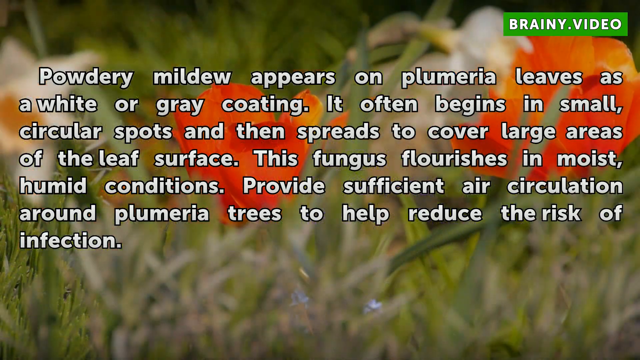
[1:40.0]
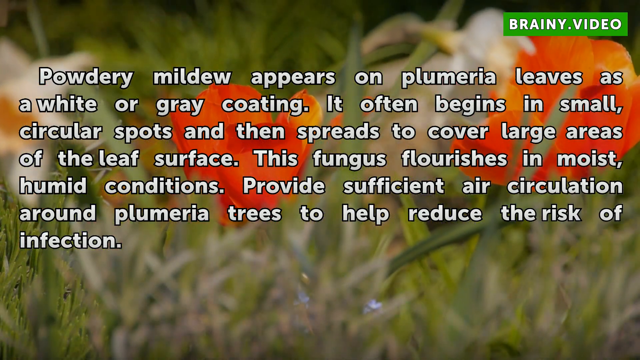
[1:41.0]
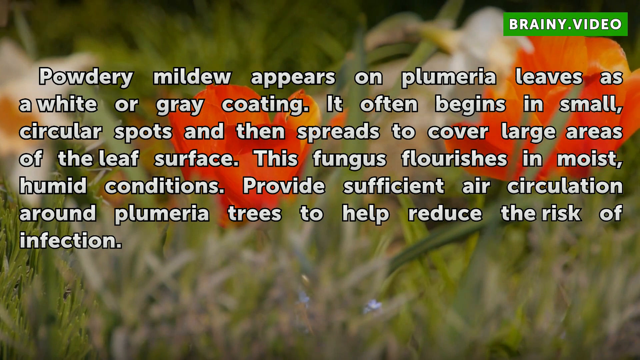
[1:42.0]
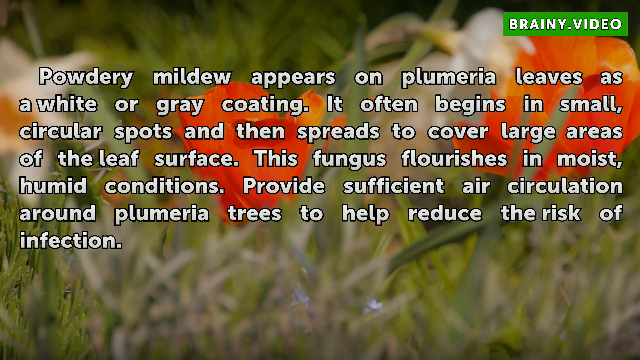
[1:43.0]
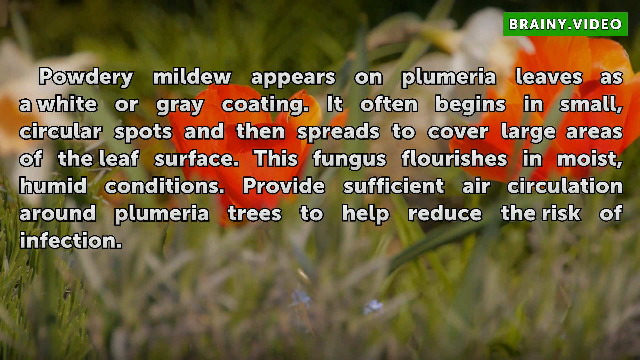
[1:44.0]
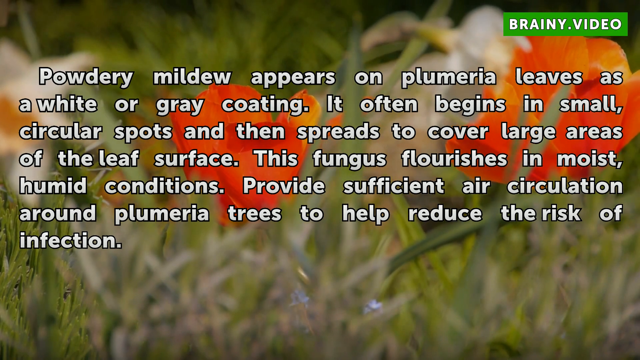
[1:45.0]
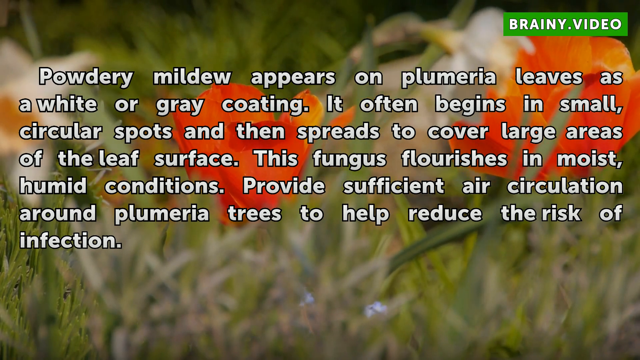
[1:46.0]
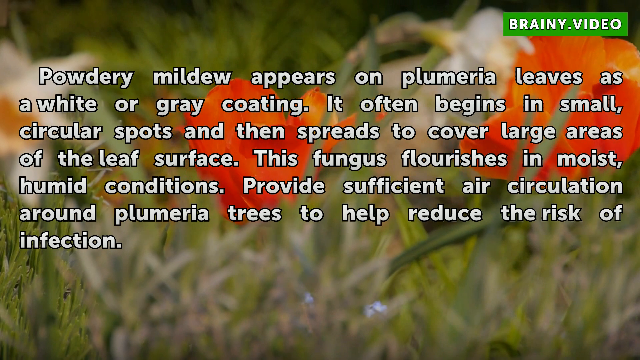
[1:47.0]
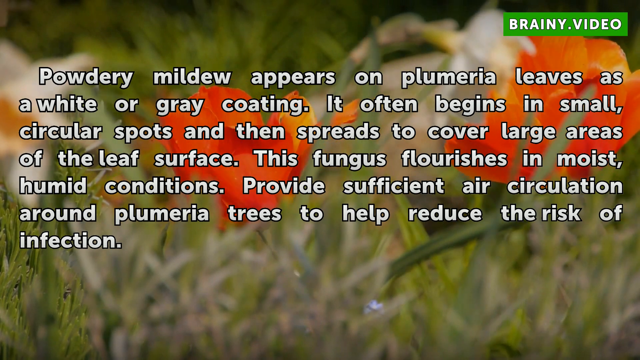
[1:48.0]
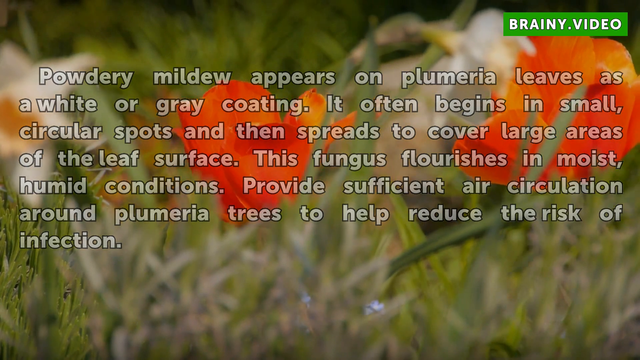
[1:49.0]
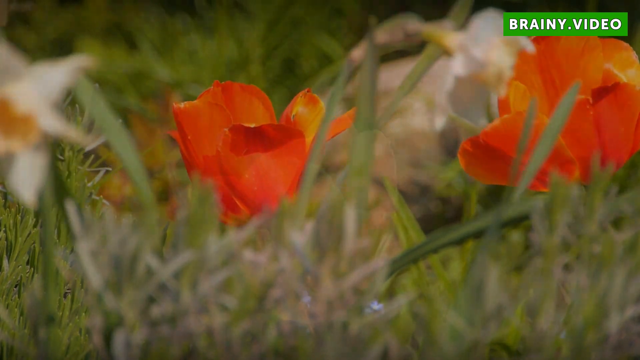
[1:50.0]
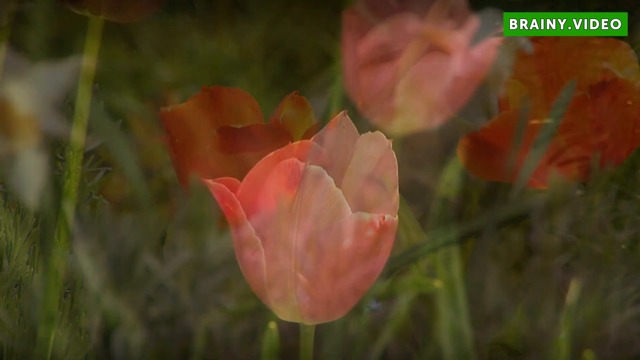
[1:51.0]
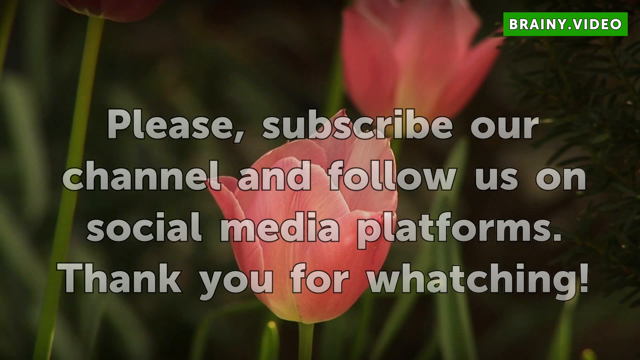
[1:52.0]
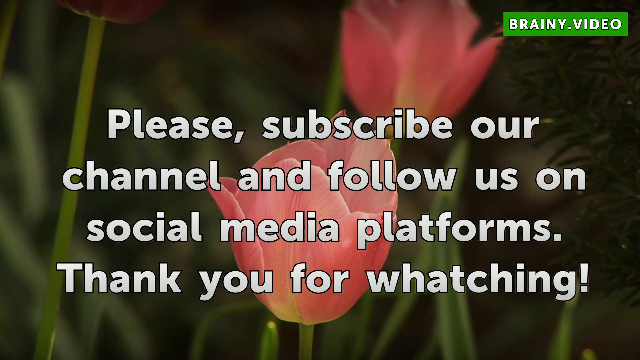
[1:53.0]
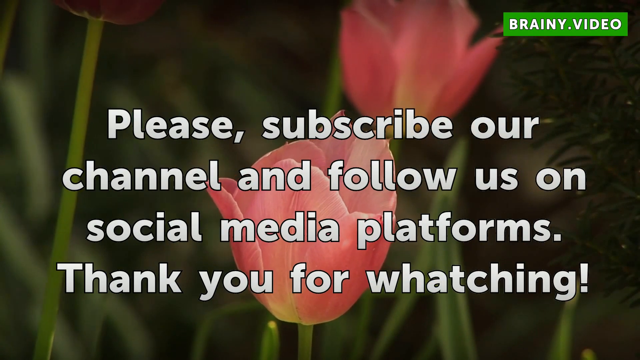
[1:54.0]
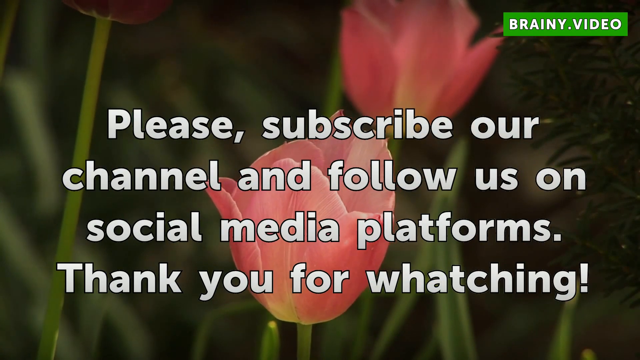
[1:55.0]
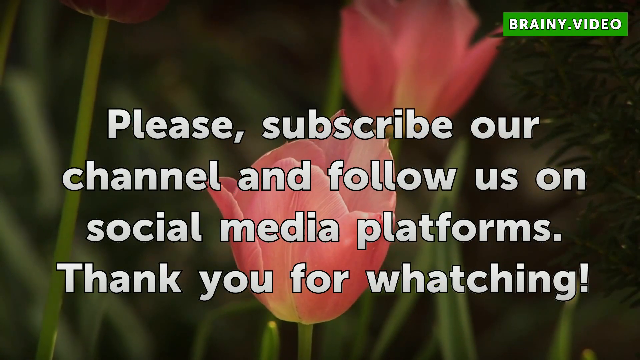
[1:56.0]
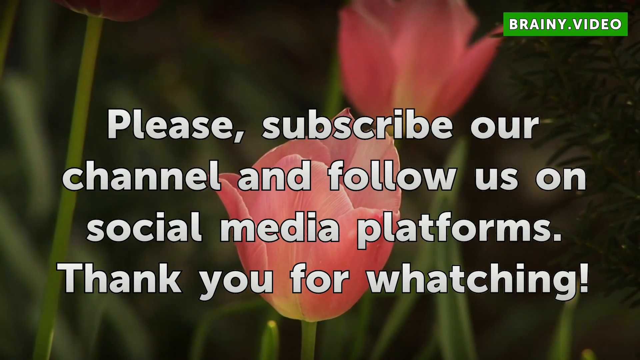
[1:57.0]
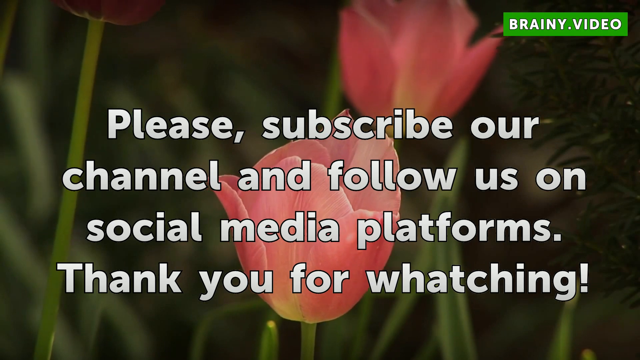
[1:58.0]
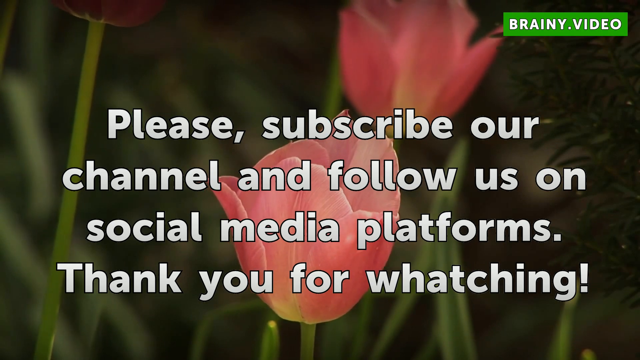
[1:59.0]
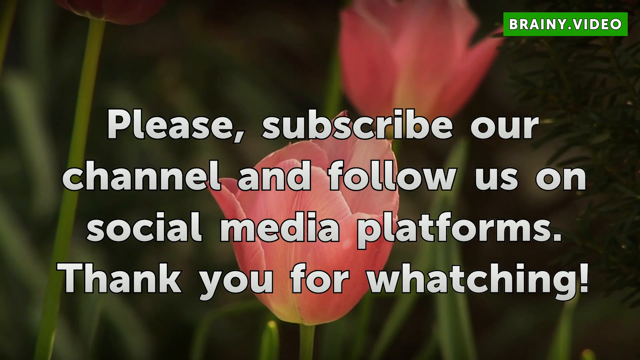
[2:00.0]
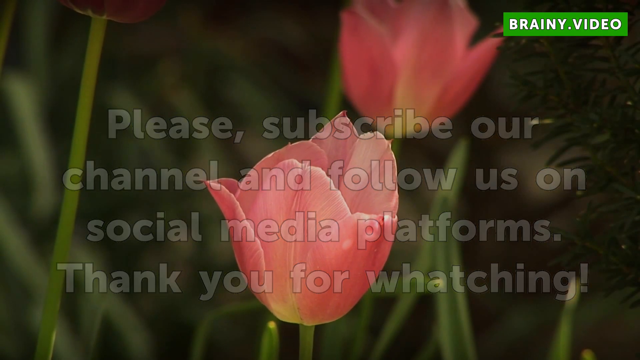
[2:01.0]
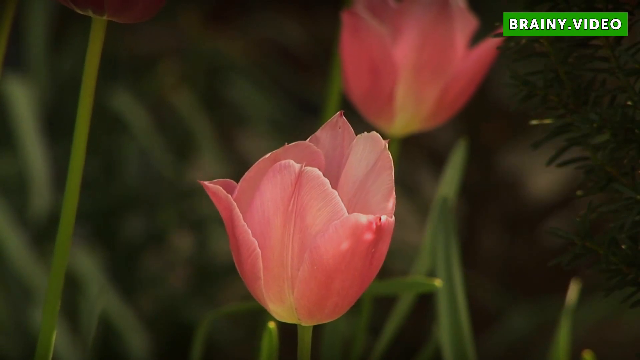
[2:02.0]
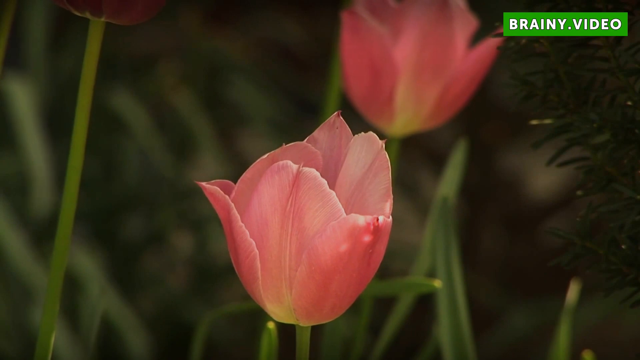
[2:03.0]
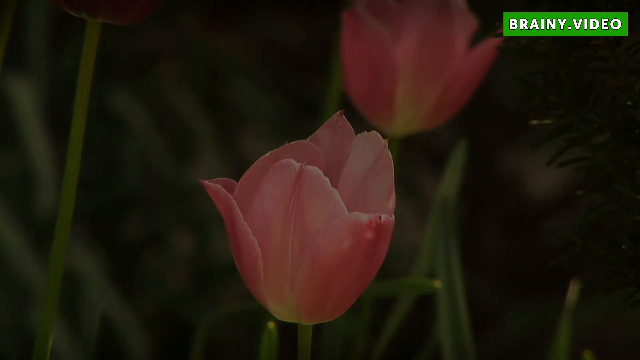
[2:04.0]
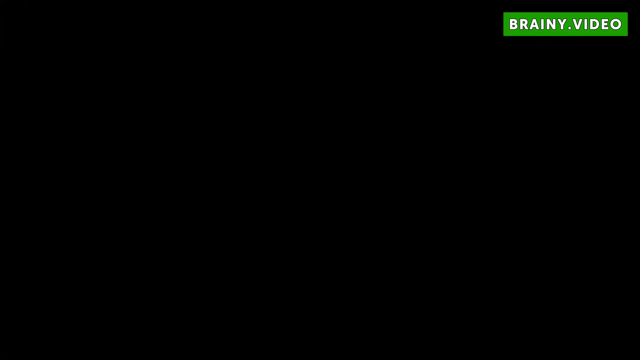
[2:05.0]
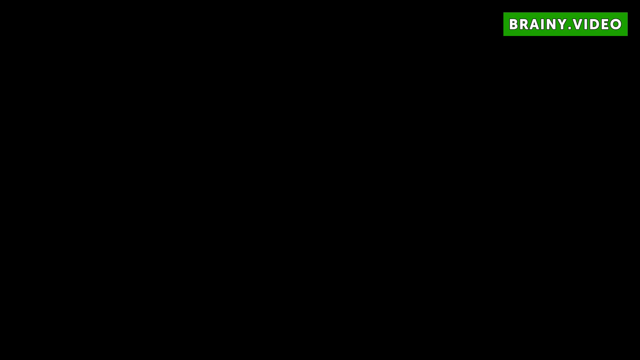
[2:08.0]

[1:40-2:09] The powdery mildew text remains: "appears on the plumeria leaves as a white or grey coating. It often begins in small circular spots and then spreads to cover large areas of the leaf surface. This fungus flourishes in moist and humid conditions. Provide sufficient air circulation around plumeria trees to help reduce the risk of this infection." The video then asks viewers to please subscribe to the channel and follow on social media platforms, and thanks them for watching.